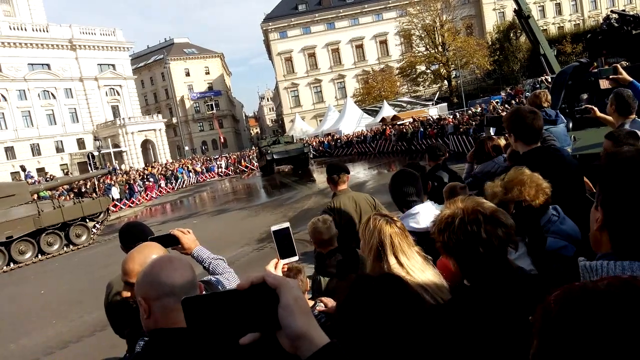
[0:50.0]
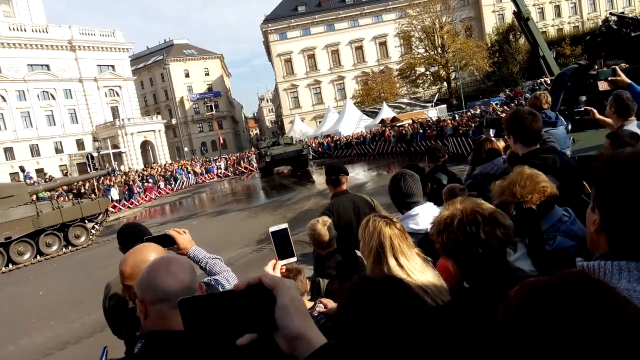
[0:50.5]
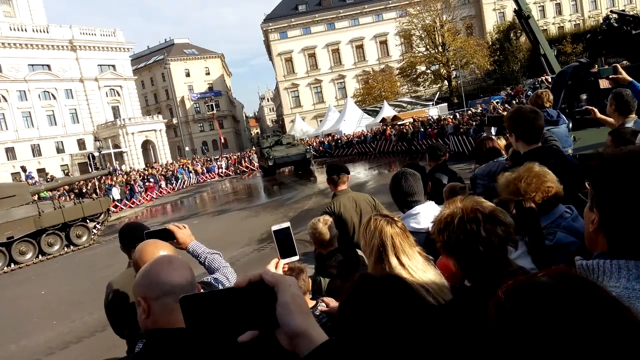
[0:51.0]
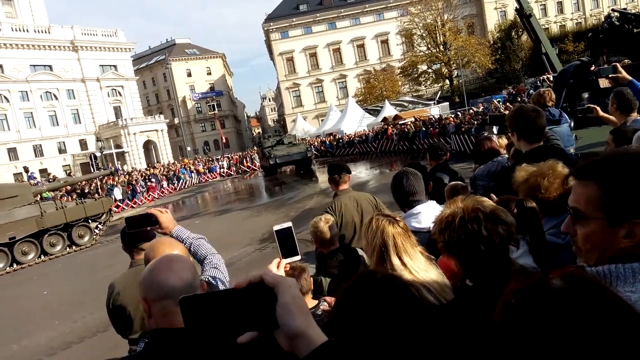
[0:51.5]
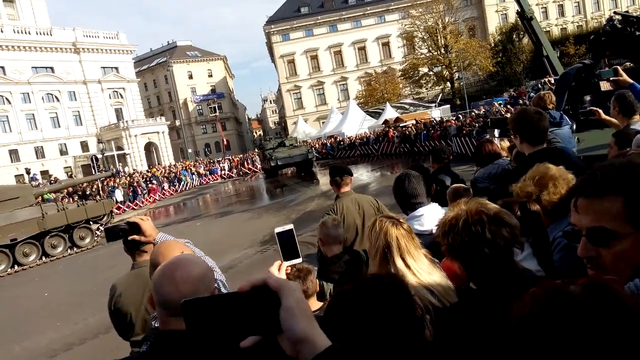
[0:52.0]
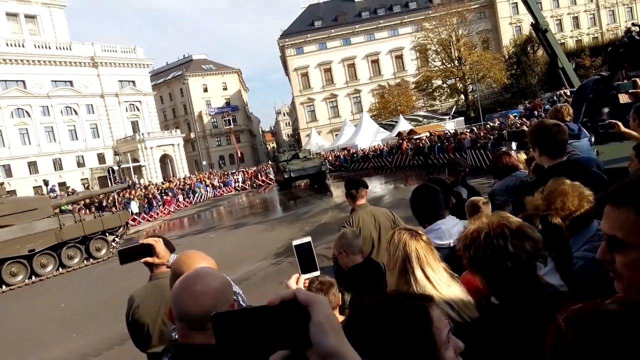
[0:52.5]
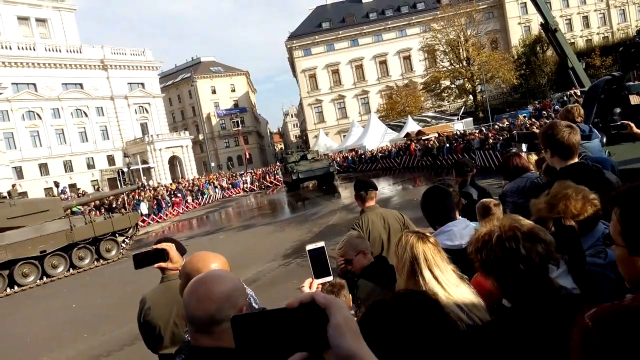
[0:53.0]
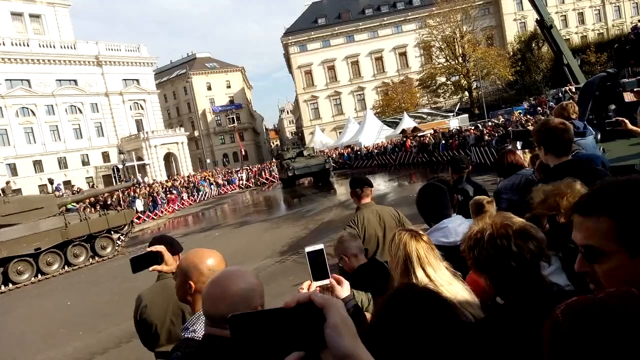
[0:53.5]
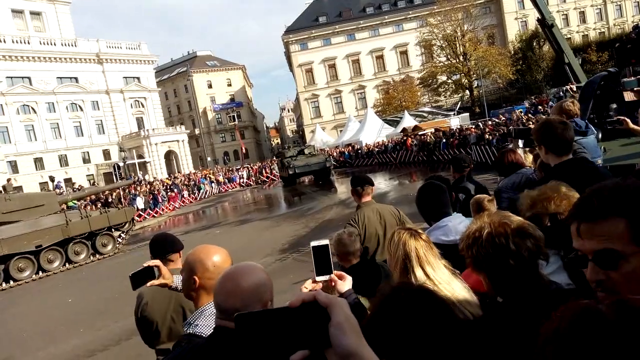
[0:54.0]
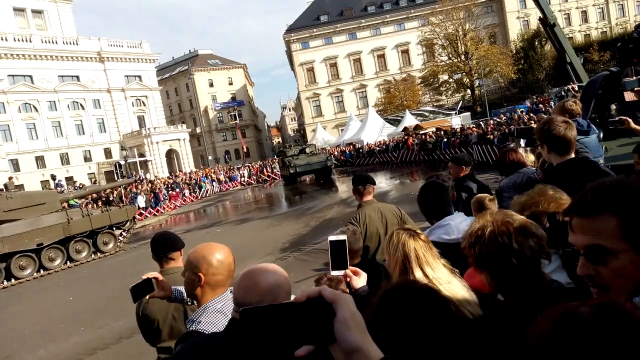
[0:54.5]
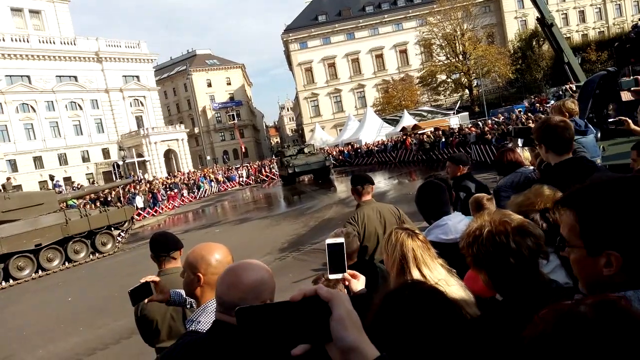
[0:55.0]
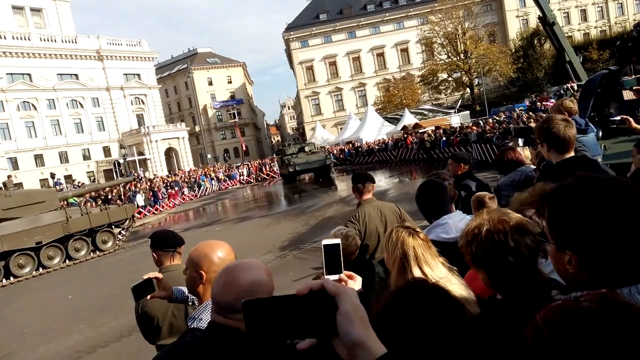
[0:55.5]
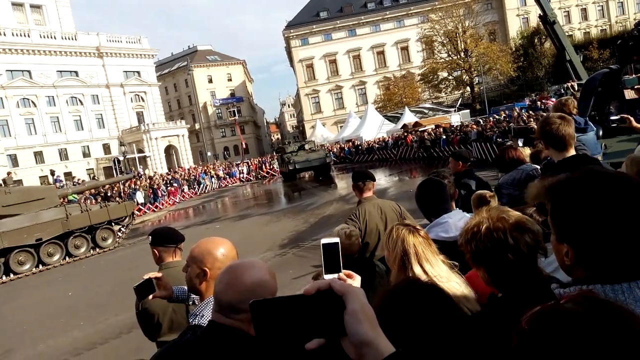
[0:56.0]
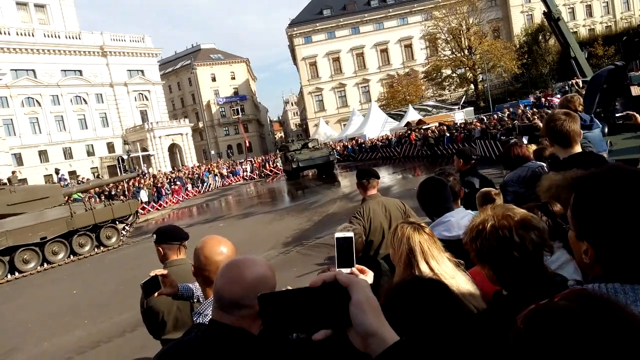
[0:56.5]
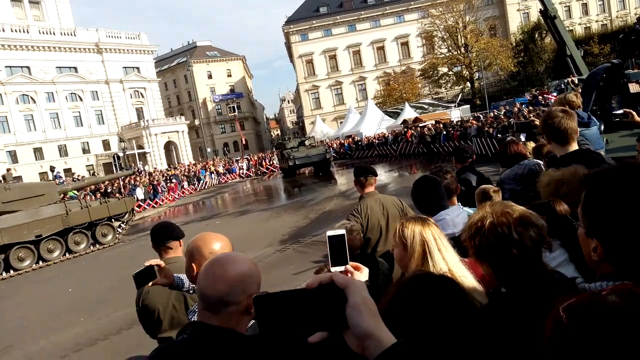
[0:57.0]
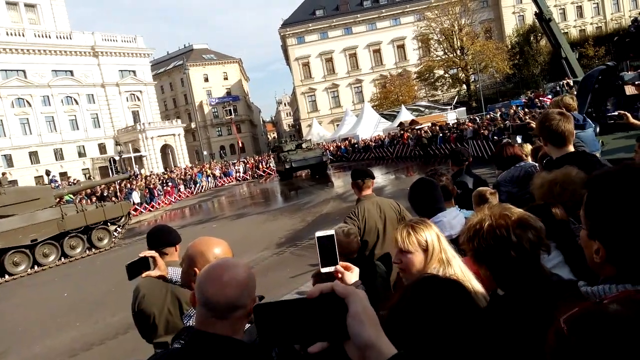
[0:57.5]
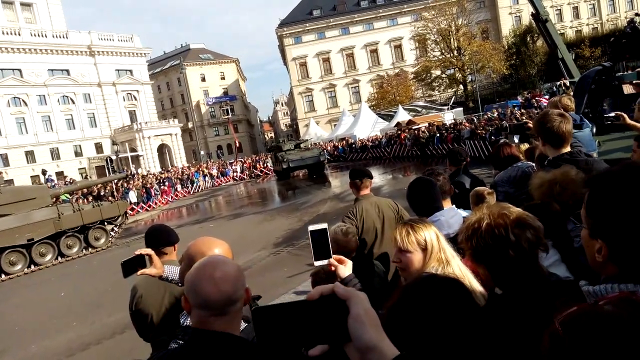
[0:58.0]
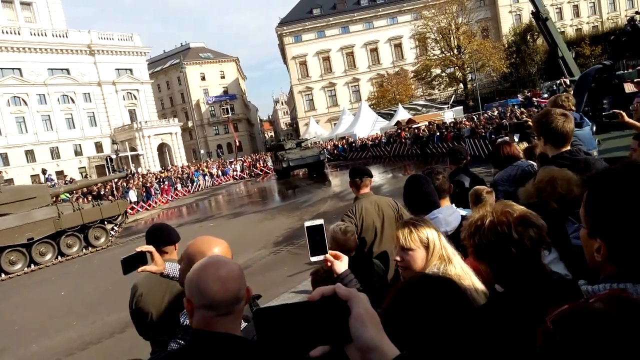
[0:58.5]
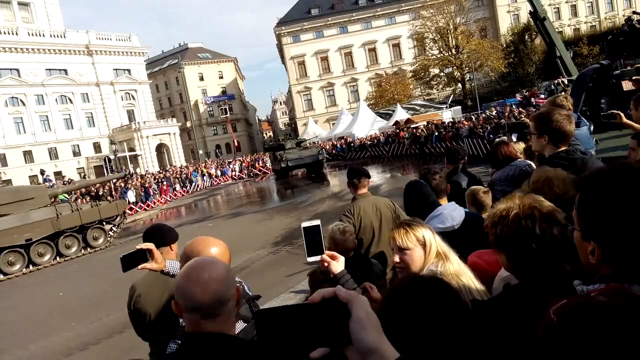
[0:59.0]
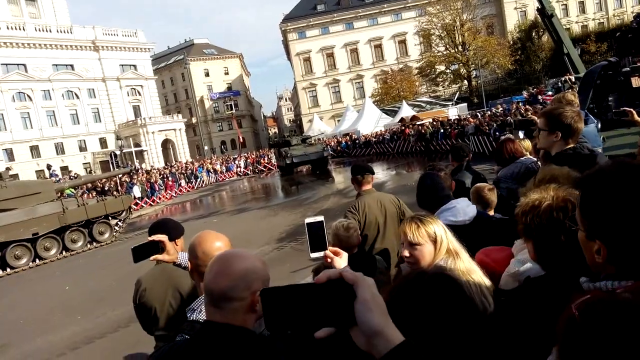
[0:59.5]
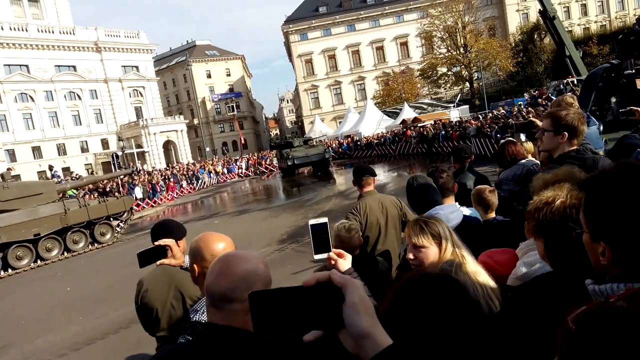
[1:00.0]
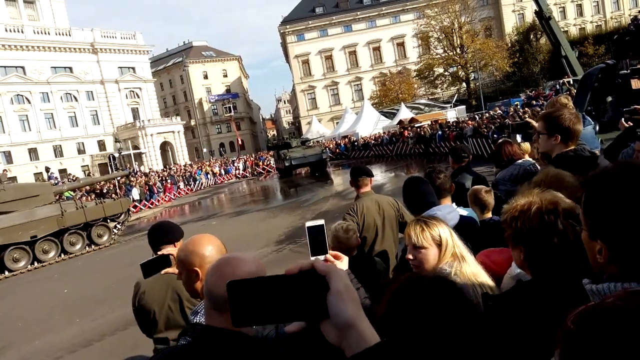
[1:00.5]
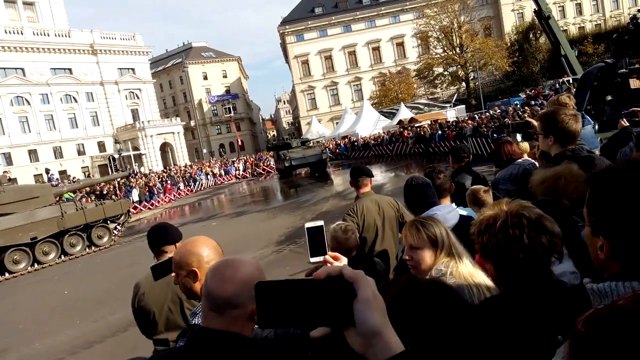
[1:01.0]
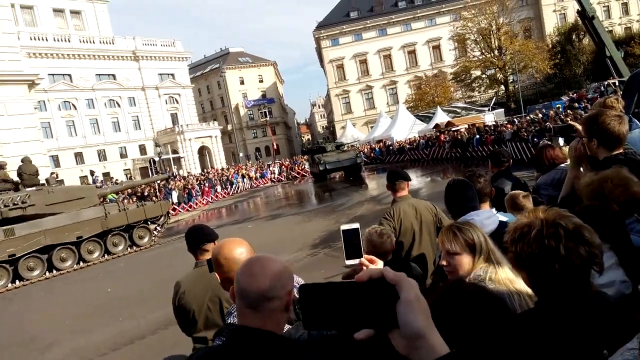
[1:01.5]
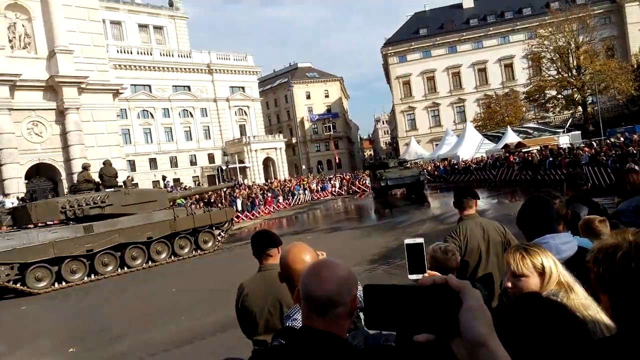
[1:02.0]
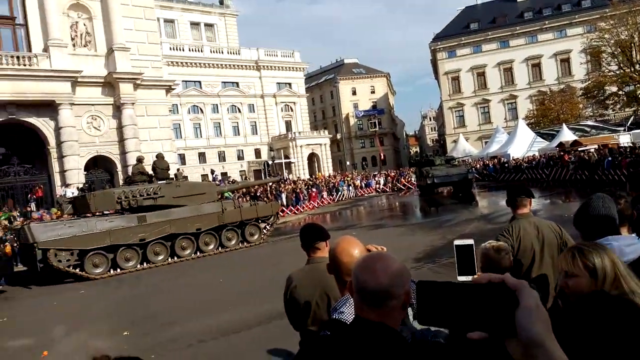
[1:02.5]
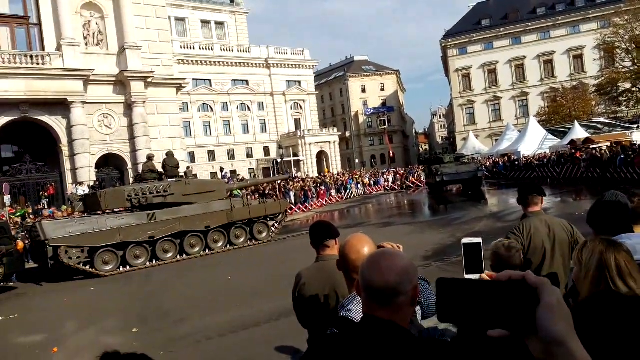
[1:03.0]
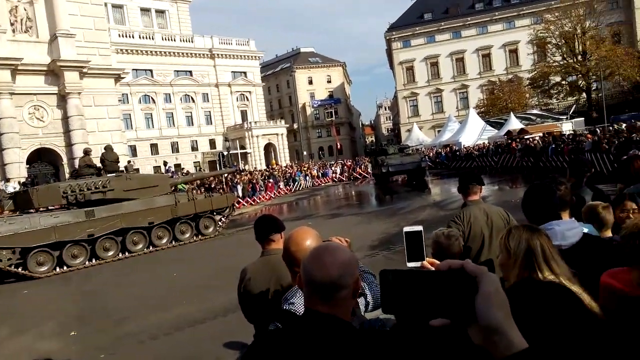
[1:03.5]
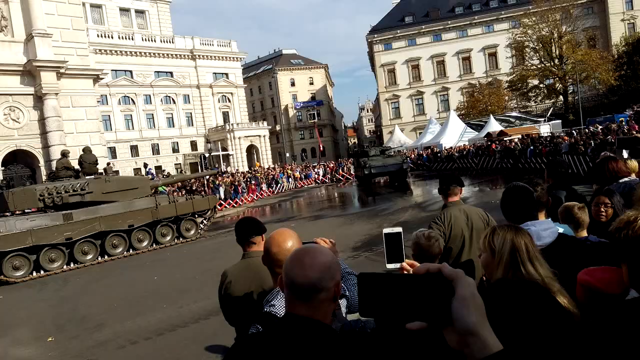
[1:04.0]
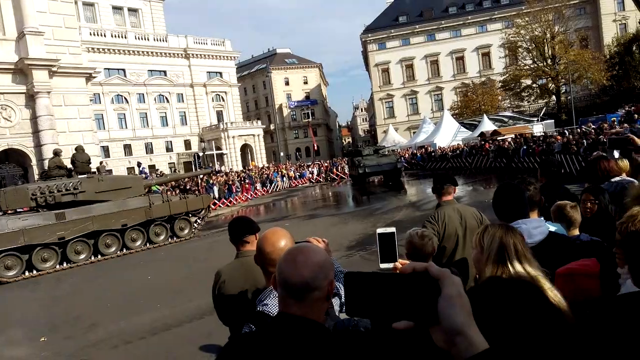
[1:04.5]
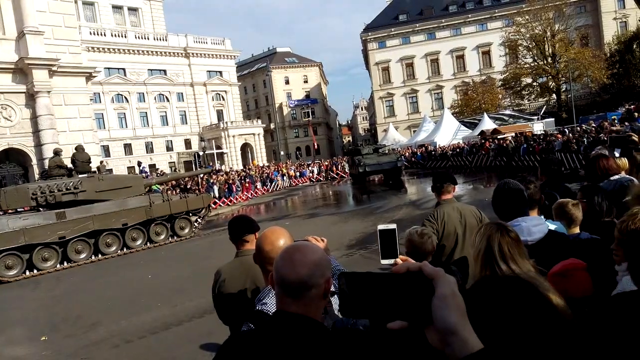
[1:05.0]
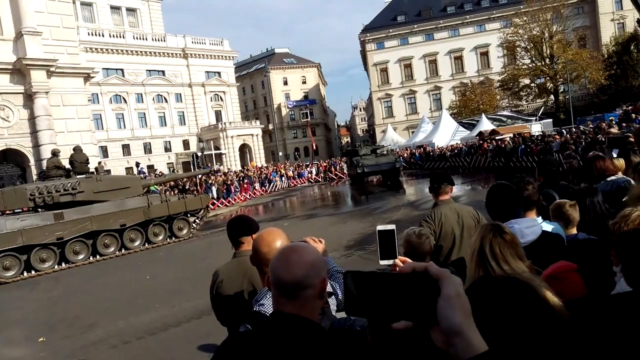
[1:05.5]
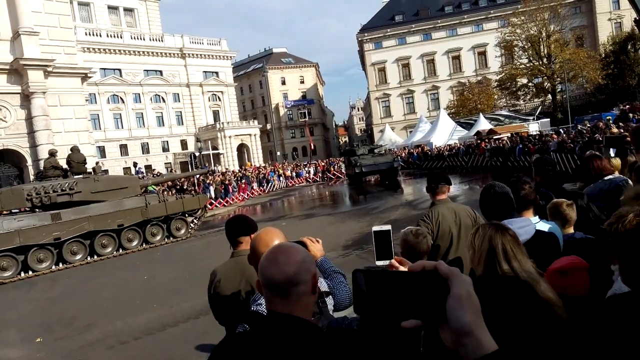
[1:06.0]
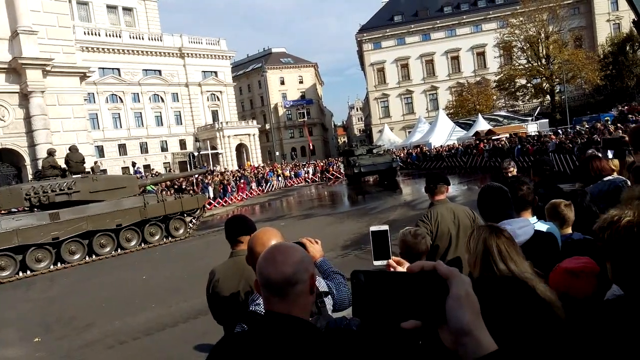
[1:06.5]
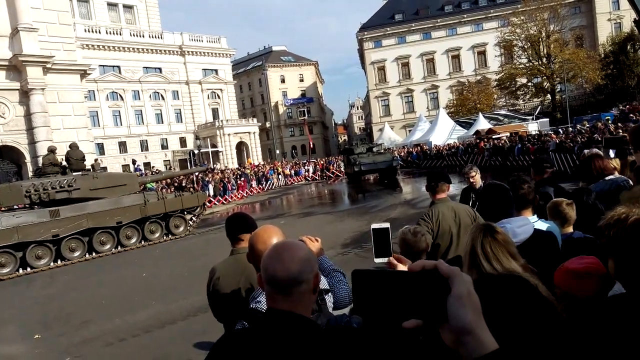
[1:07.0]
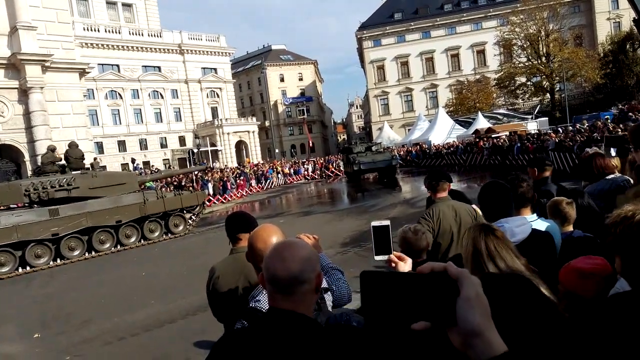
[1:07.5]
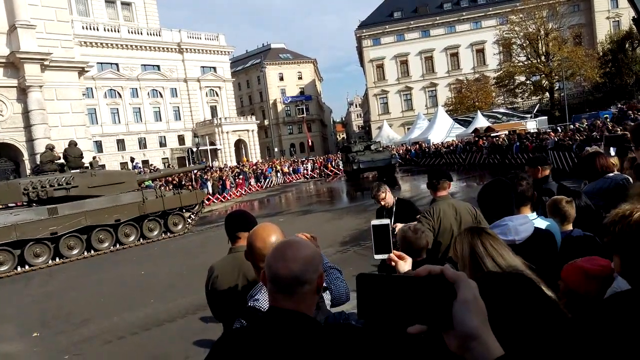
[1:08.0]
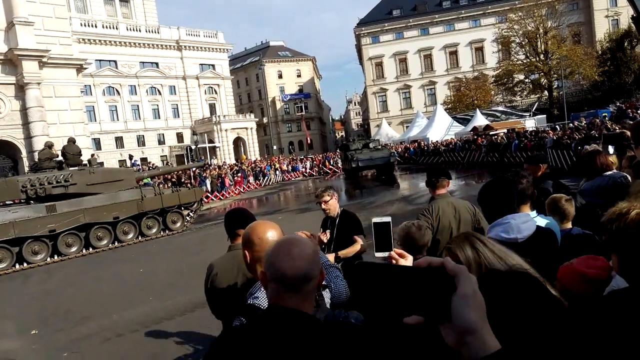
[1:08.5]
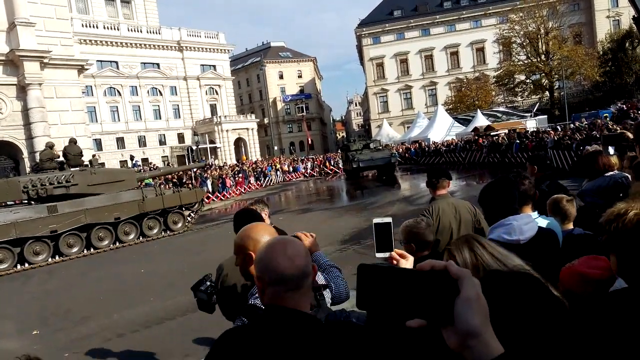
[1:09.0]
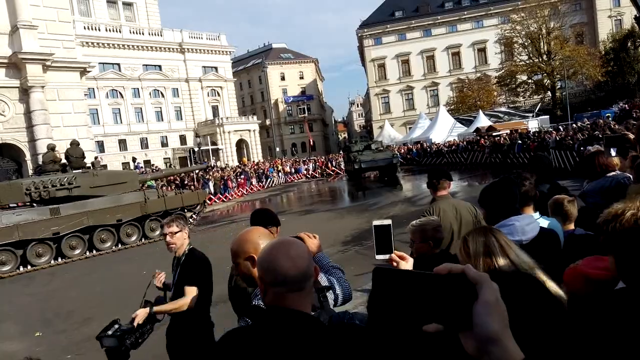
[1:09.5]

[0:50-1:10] With the tank halted at the end of the parade ground in front of the white marquees, the crowd's attention begins to lose focus. Heads move around more, and instead of just the backs of people's heads in the foreground, some faces are visible. Mobile phones are still being used to film, and one person moves their phone to the left, appearing to focus on something just out of sight. The angle then changes, revealing that this person is filming the other tank, which stays stationary and is situated towards the left of the frame with two people sitting on top of it. A second soldier seems to be keeping the crowd under control. Afterwards, someone leaves the crowd towards the right side of the frame and walks along the edge of the parade ground, apparently carrying some camera equipment.